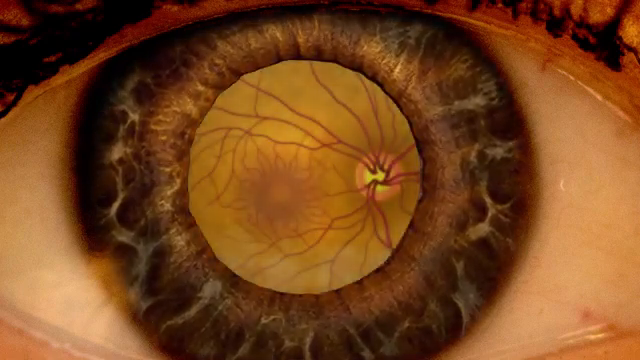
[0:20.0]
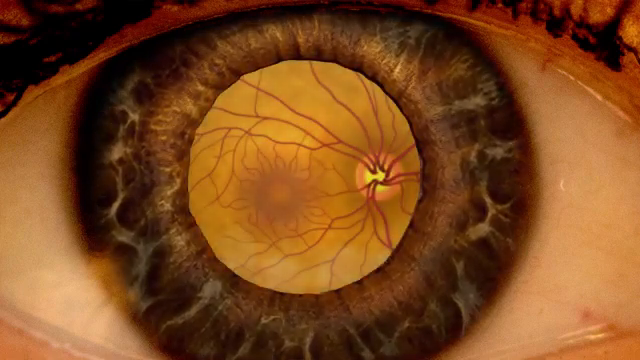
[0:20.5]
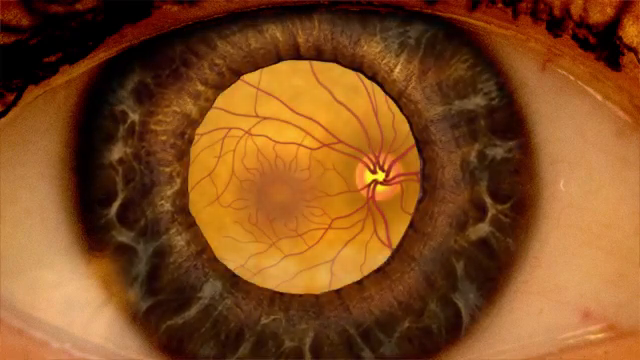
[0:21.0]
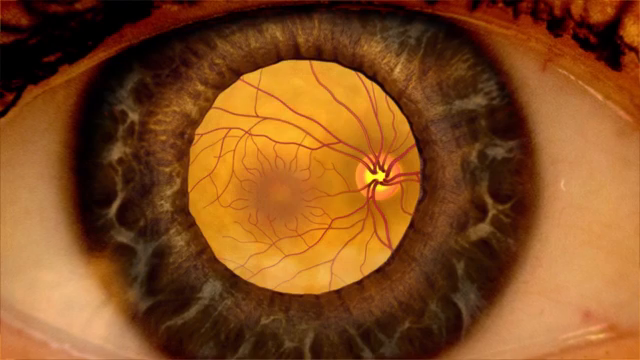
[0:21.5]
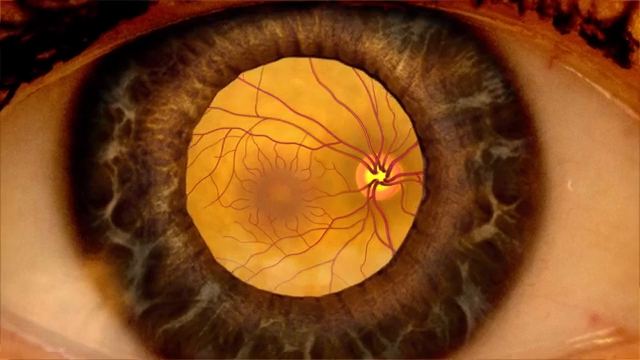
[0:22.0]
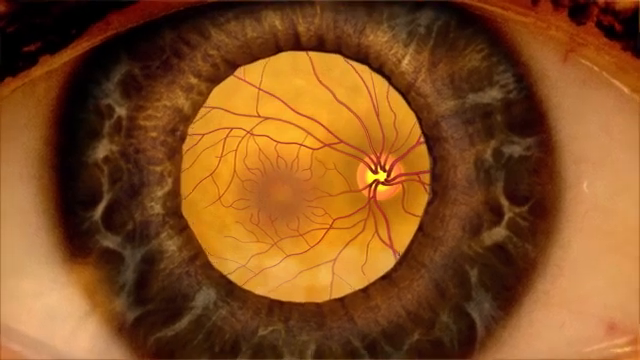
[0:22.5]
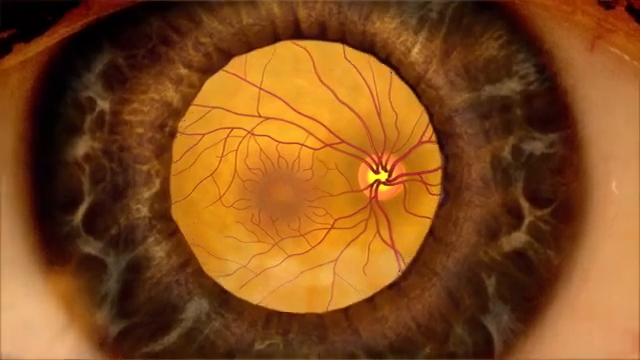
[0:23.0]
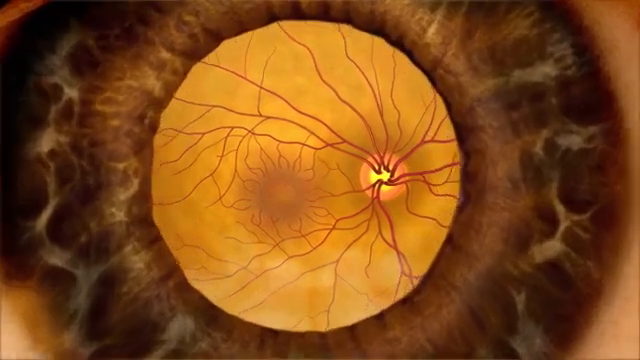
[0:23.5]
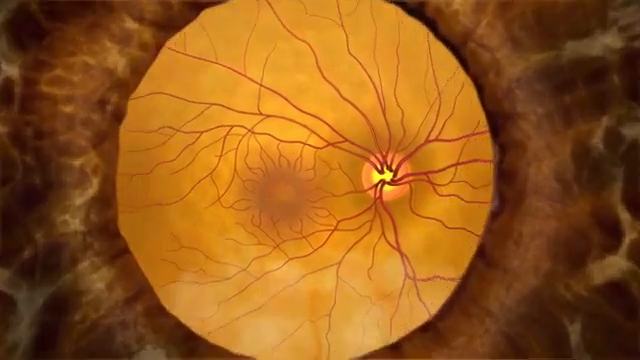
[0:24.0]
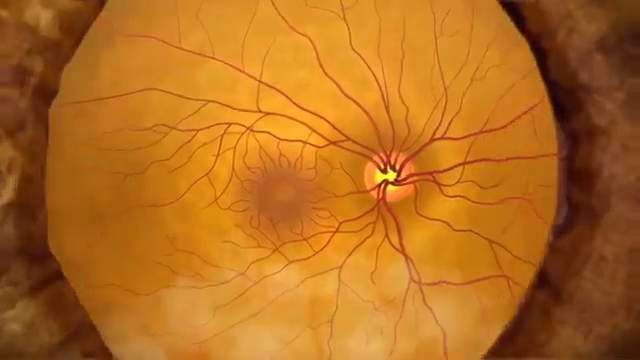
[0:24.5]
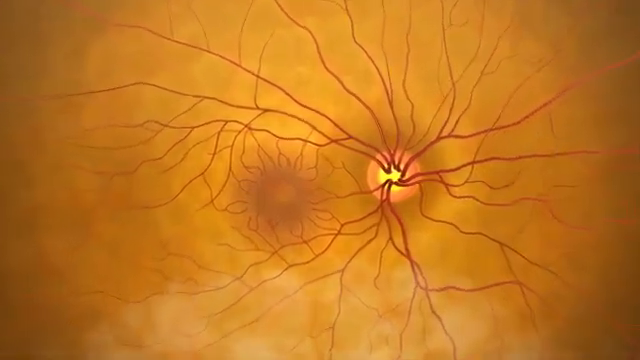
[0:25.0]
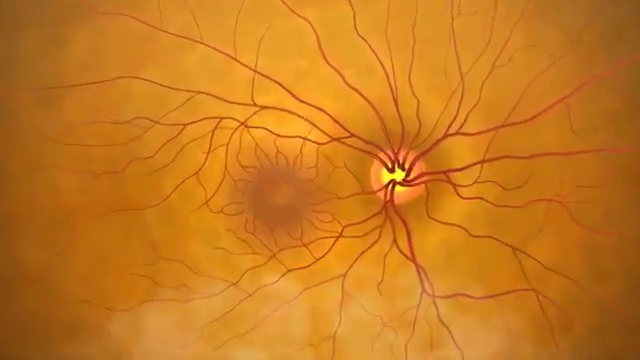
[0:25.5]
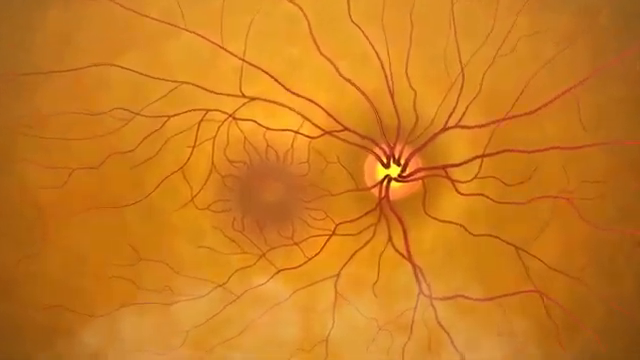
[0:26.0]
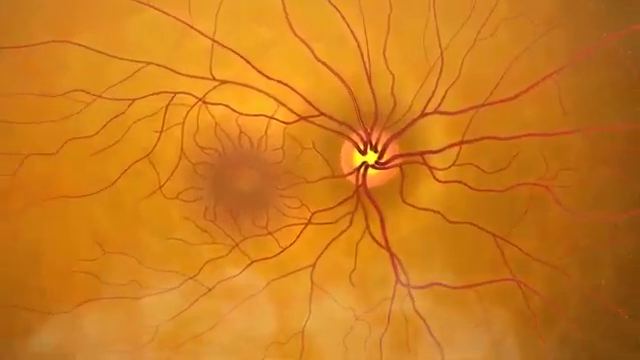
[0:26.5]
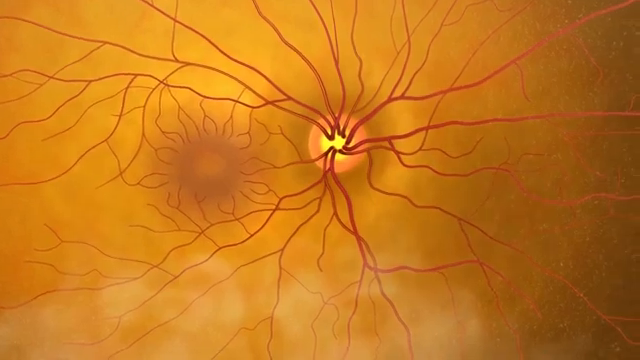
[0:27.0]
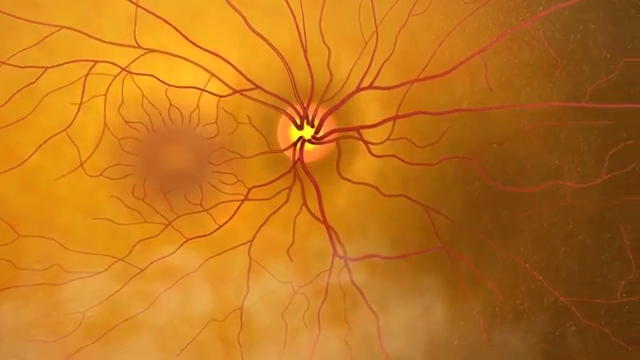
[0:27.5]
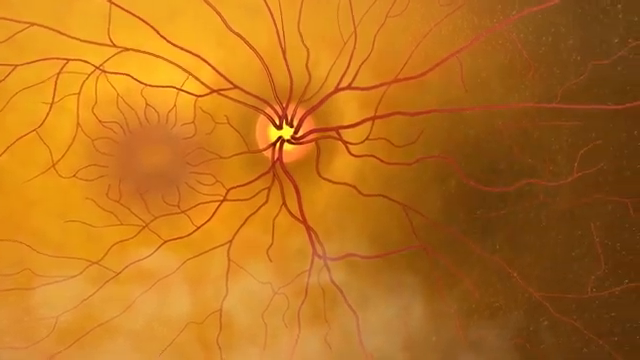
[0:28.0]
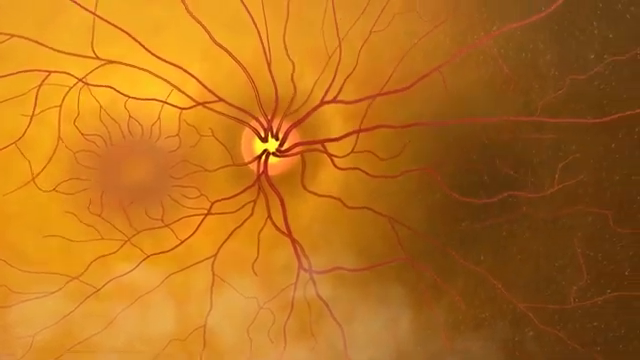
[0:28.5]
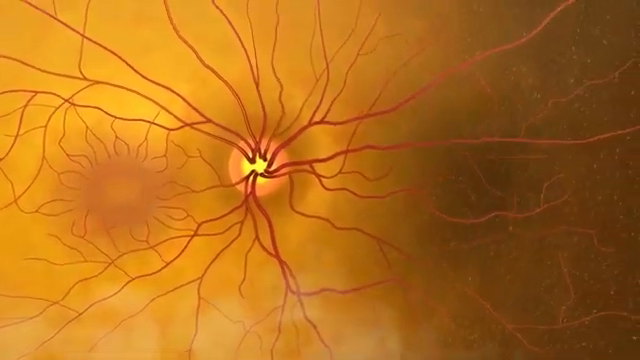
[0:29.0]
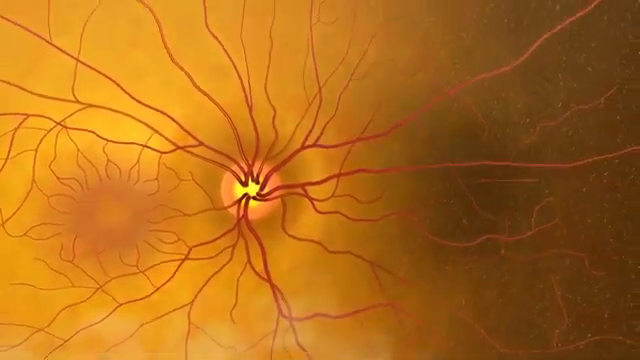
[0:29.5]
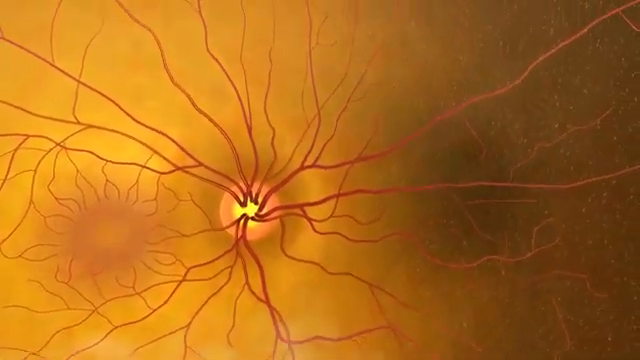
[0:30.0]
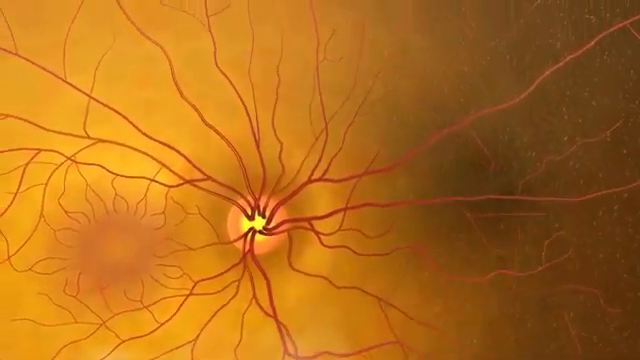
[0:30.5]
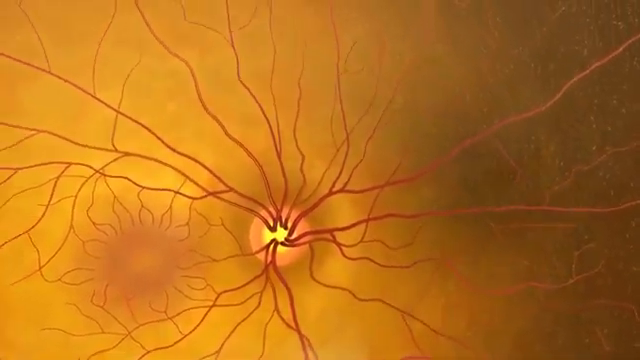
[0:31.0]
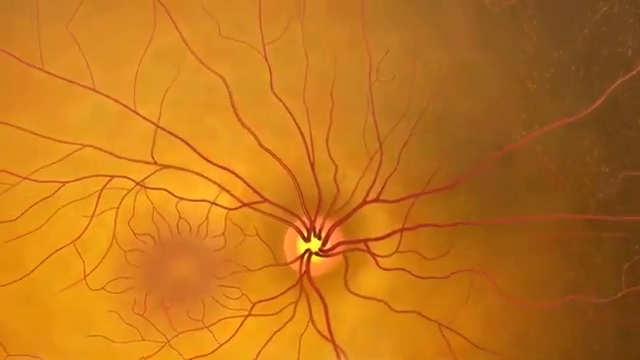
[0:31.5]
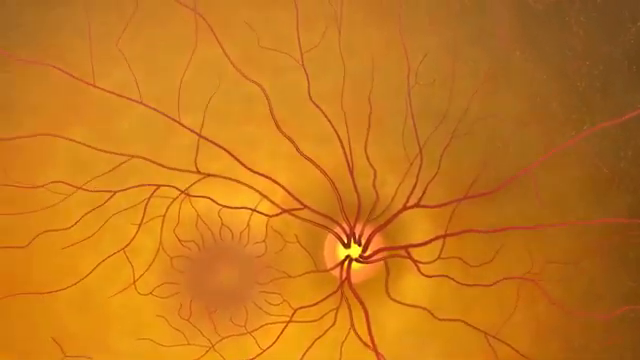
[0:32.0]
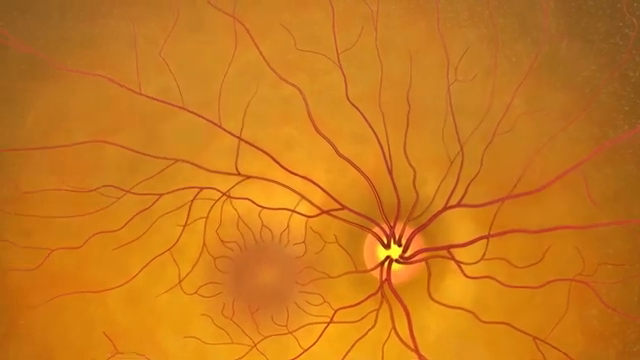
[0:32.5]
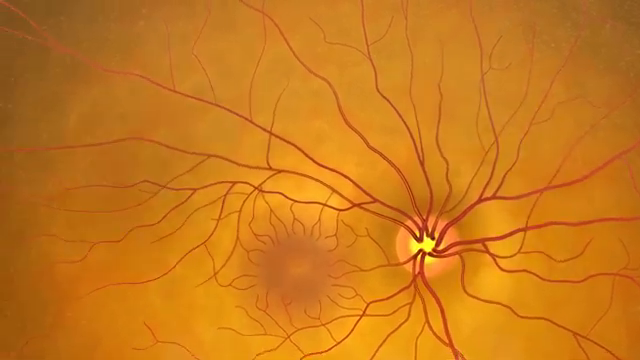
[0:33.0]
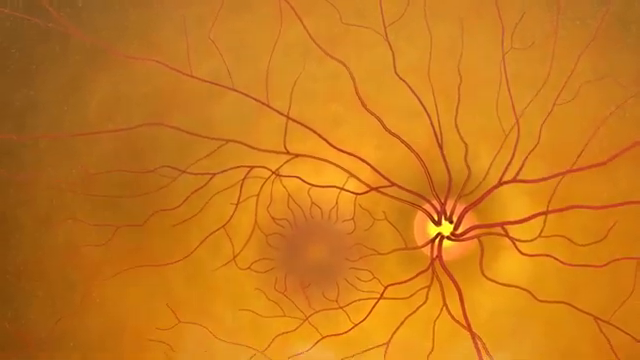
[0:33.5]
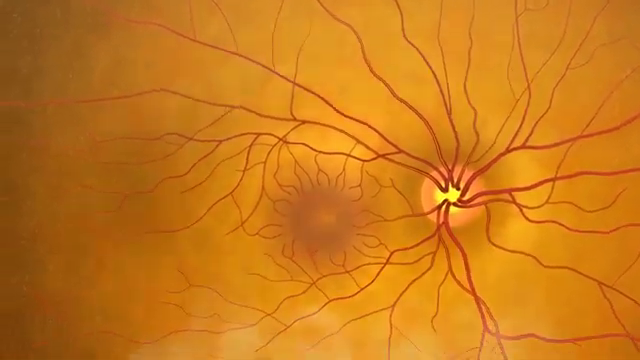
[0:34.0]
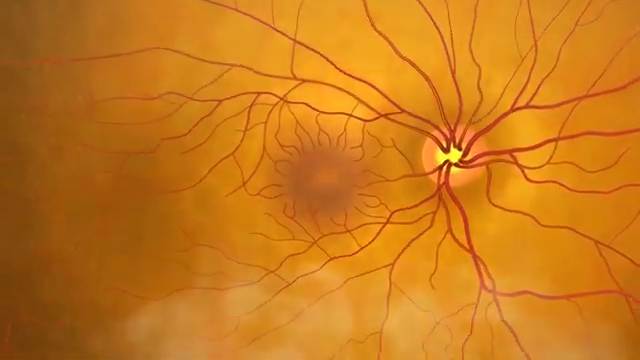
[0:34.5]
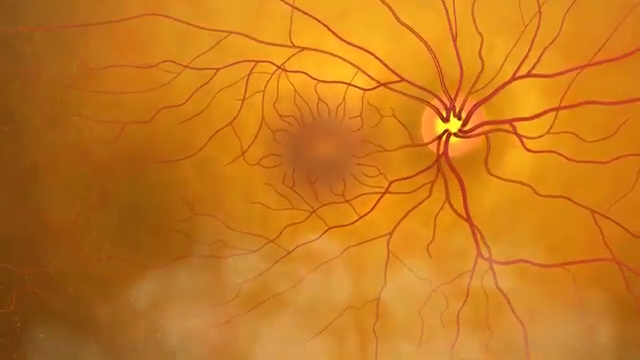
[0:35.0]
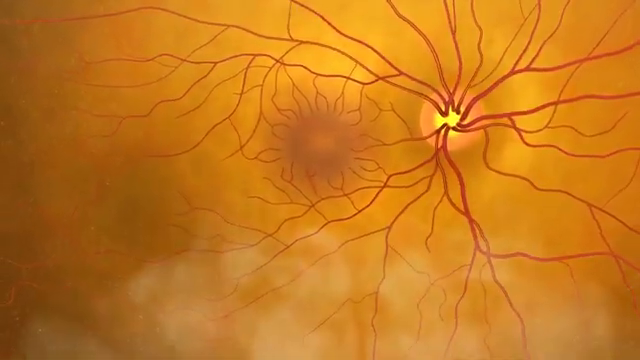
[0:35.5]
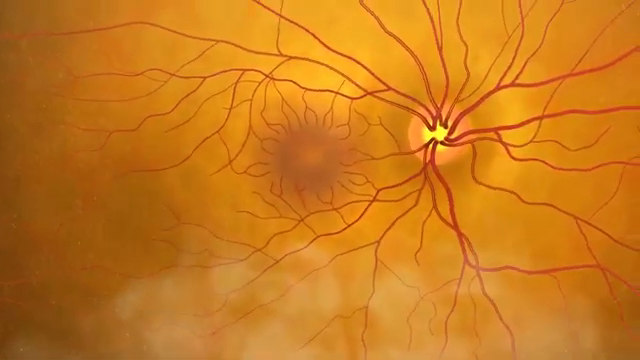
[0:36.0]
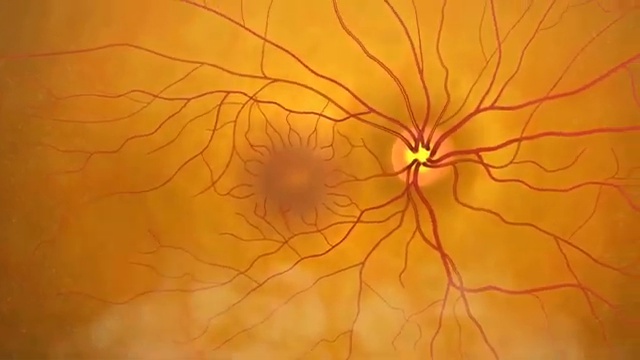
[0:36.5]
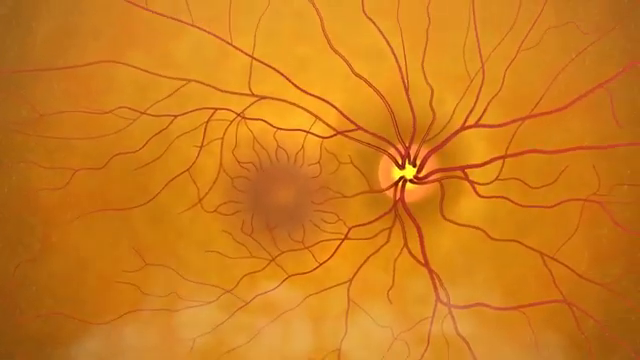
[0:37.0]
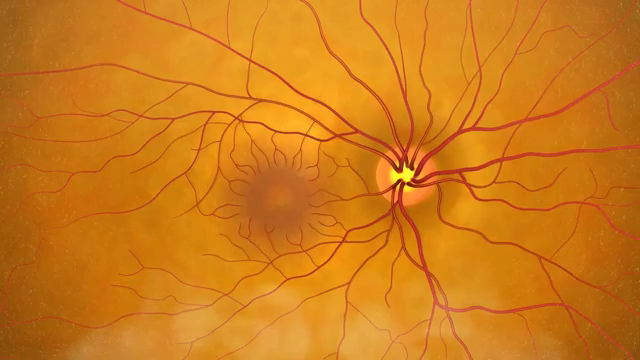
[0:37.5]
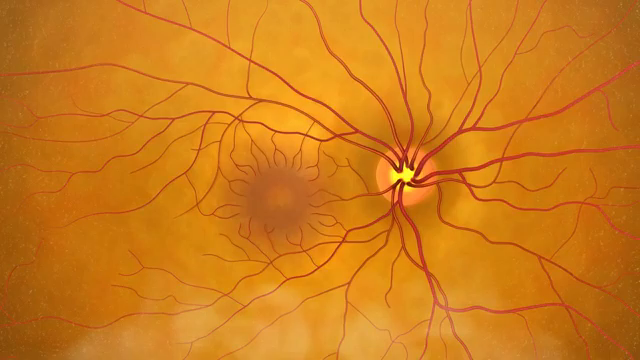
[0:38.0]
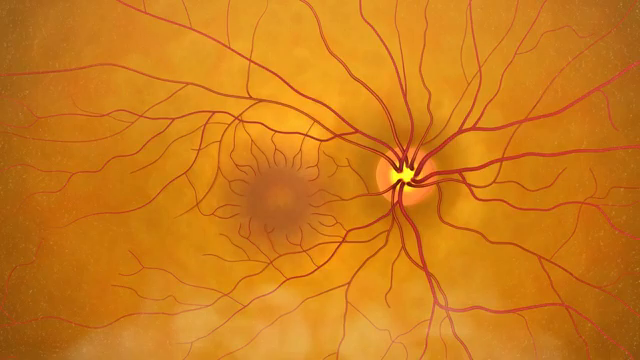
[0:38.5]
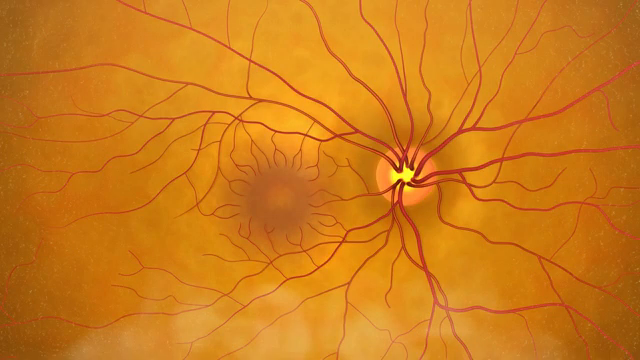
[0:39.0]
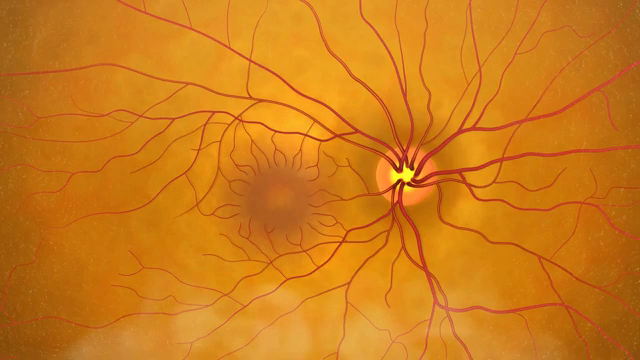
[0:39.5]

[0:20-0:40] The blood behind the iris is shown, with blood vessels going out in three different directions and a bright light right behind the red blood vessels. The red vessels branch off in different directions, and the camera also moves around in different directions to show them. The lashes are shown in a circular formation over the entire area, which is very symmetrical: going outward from the center in any direction, the coloration is the same all around the circle.